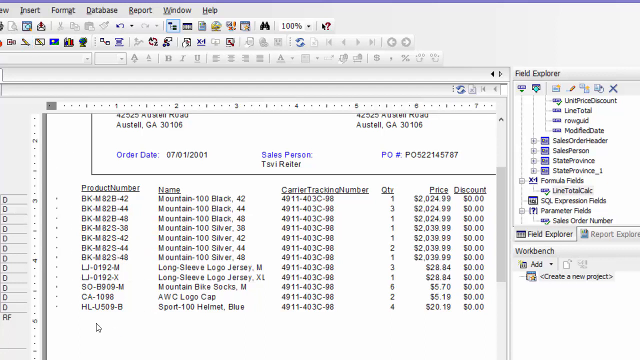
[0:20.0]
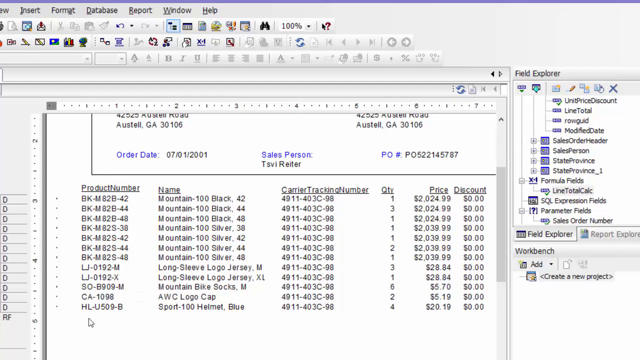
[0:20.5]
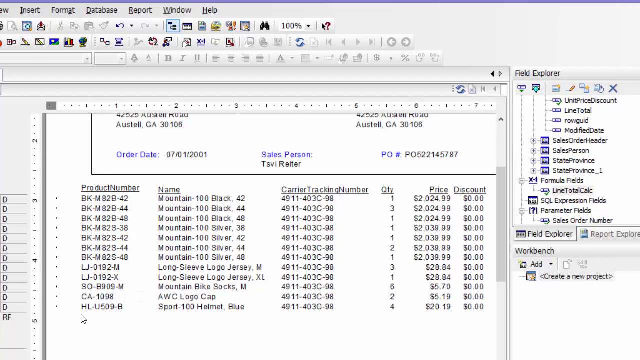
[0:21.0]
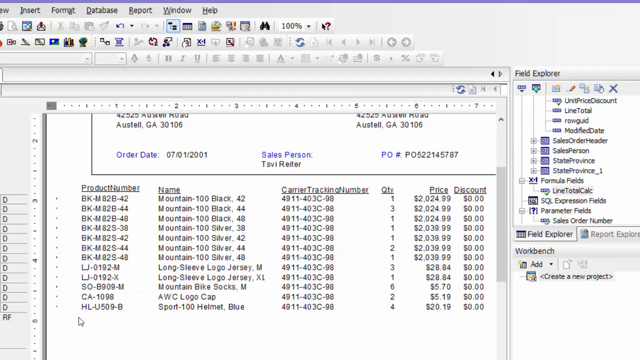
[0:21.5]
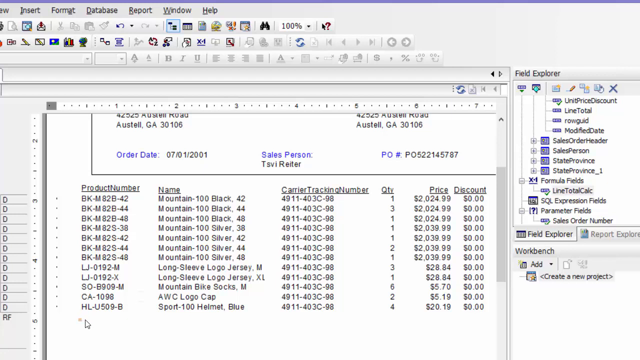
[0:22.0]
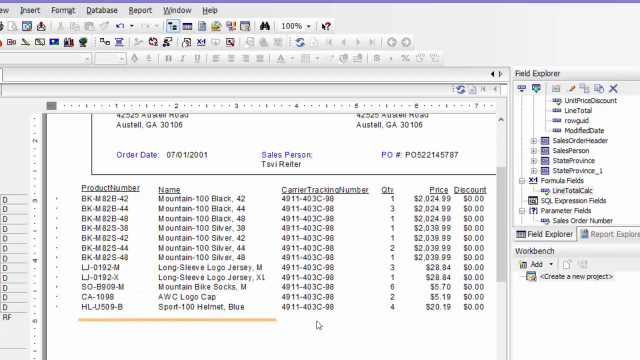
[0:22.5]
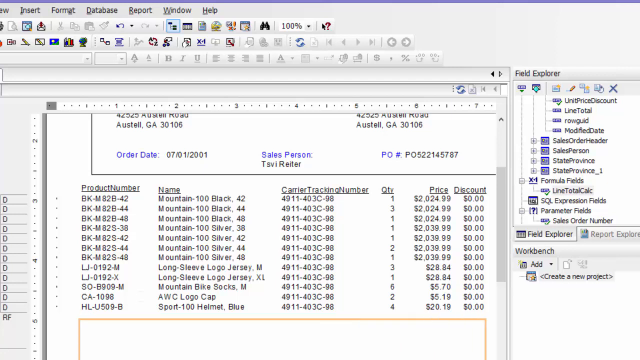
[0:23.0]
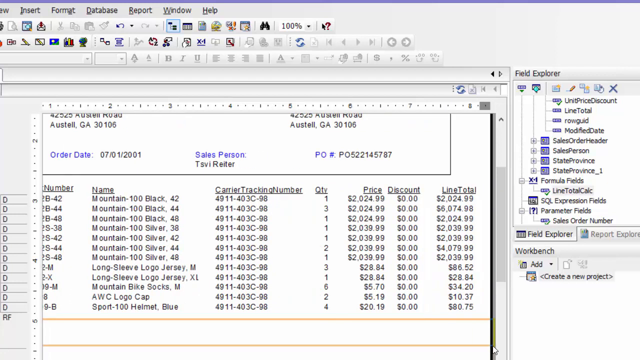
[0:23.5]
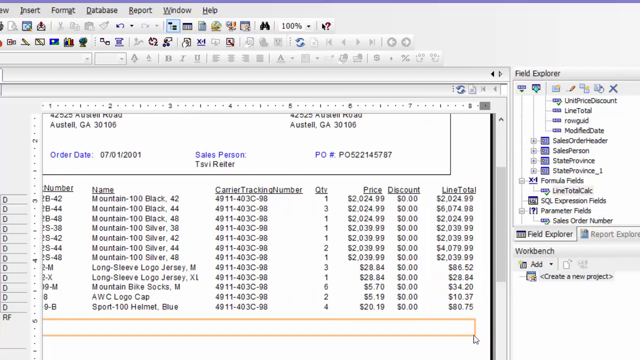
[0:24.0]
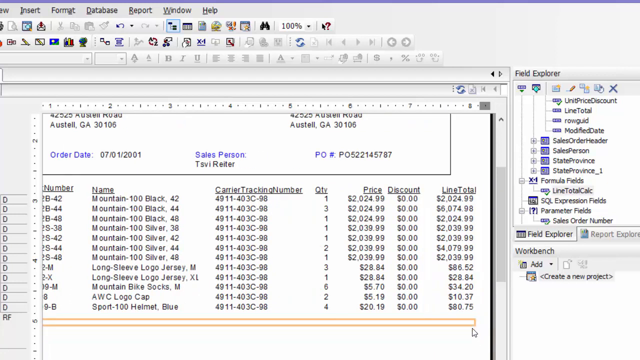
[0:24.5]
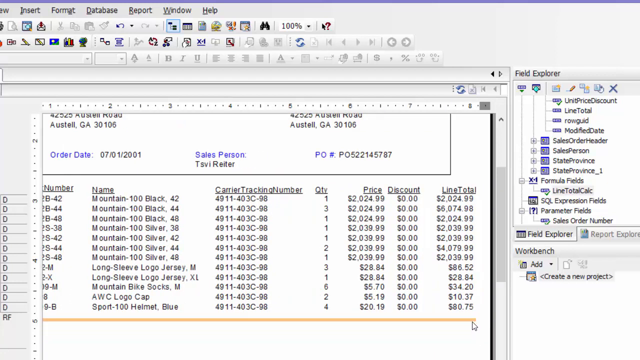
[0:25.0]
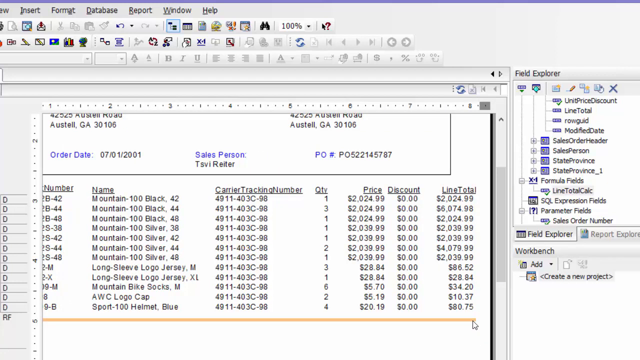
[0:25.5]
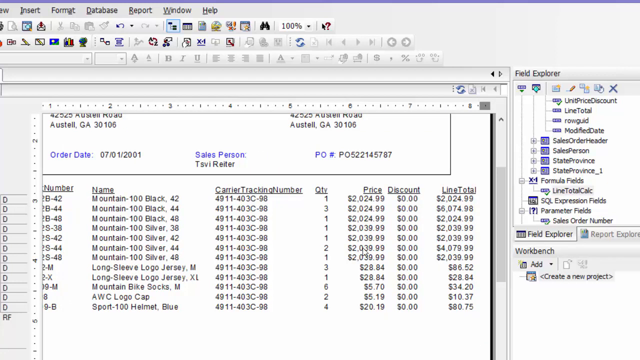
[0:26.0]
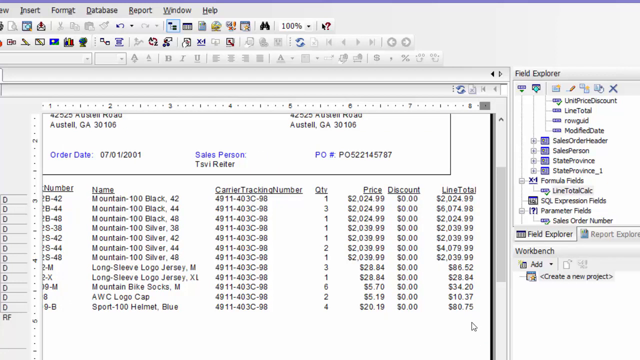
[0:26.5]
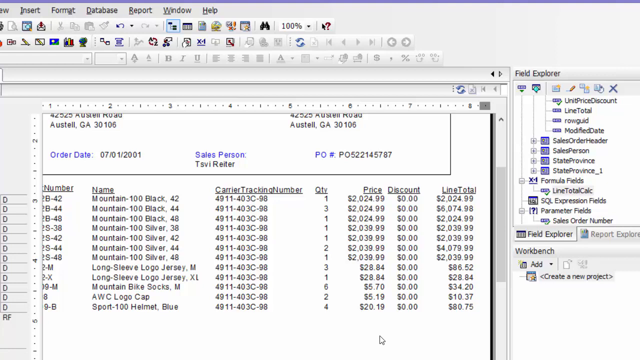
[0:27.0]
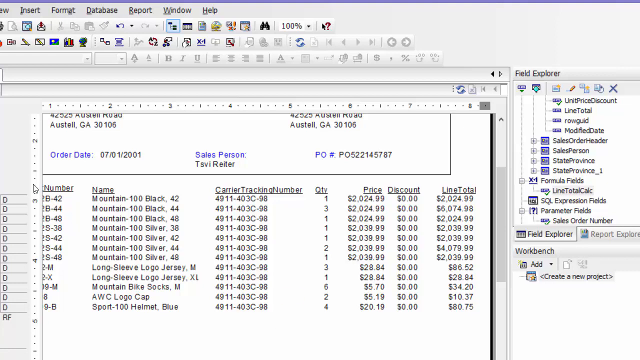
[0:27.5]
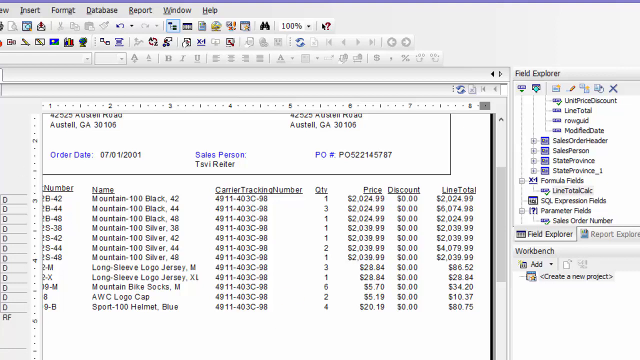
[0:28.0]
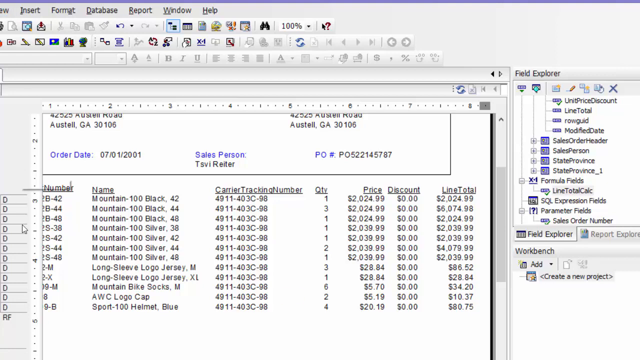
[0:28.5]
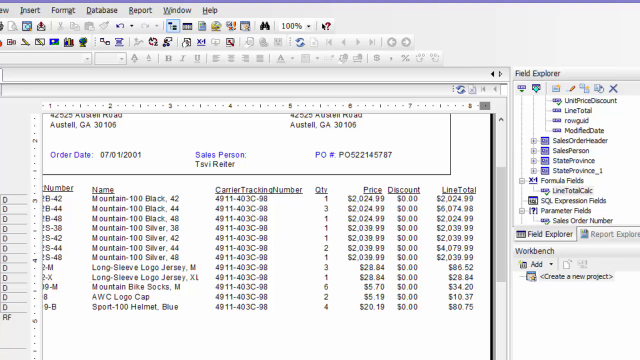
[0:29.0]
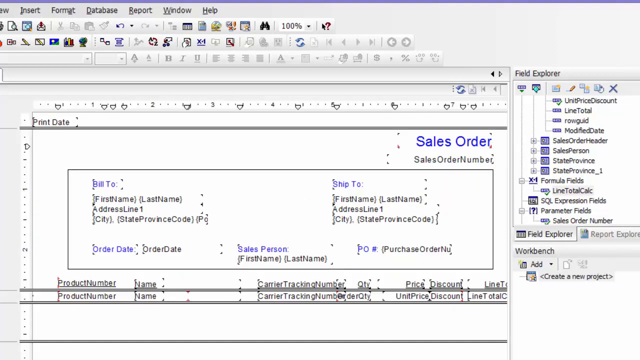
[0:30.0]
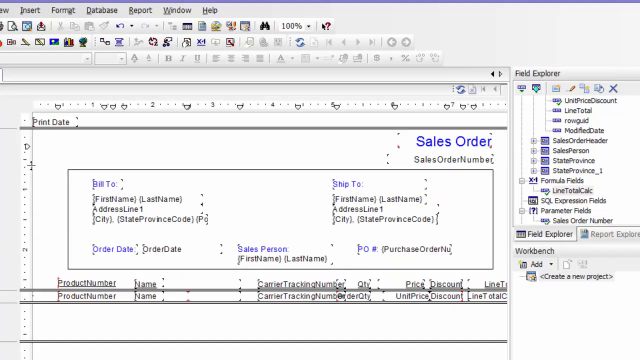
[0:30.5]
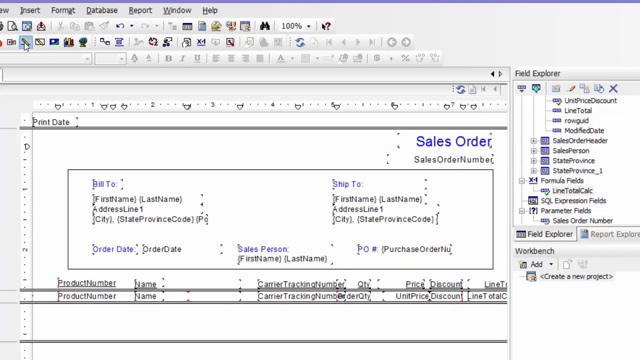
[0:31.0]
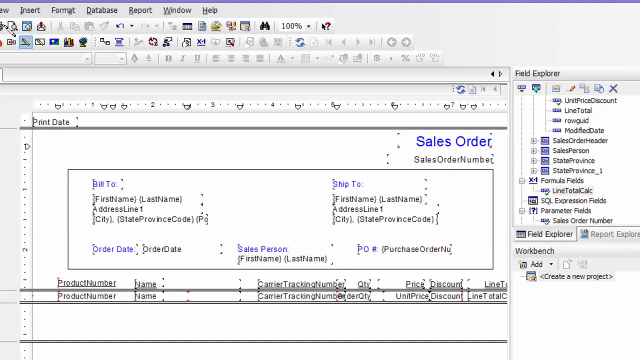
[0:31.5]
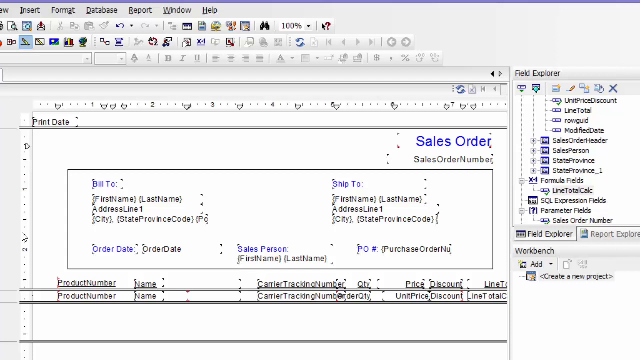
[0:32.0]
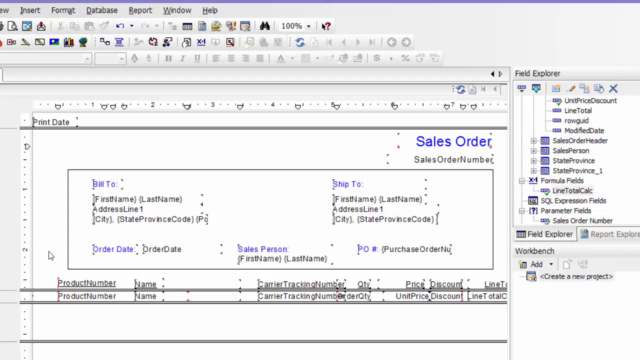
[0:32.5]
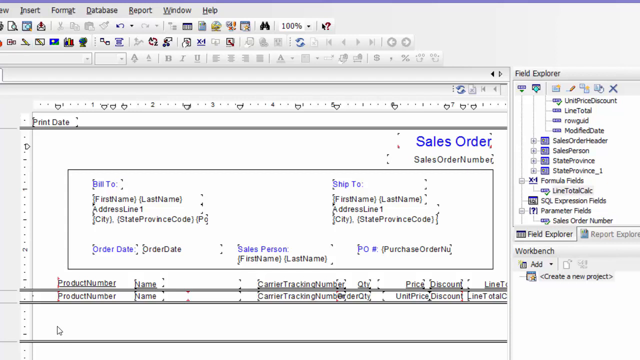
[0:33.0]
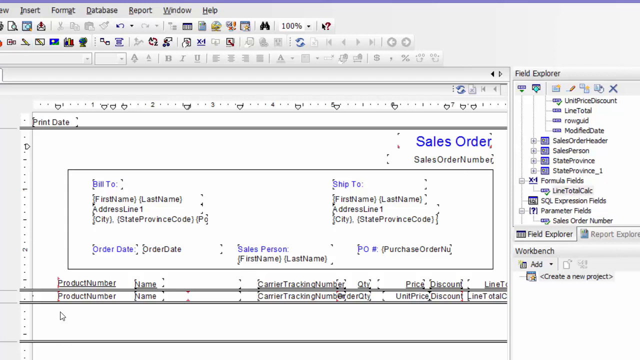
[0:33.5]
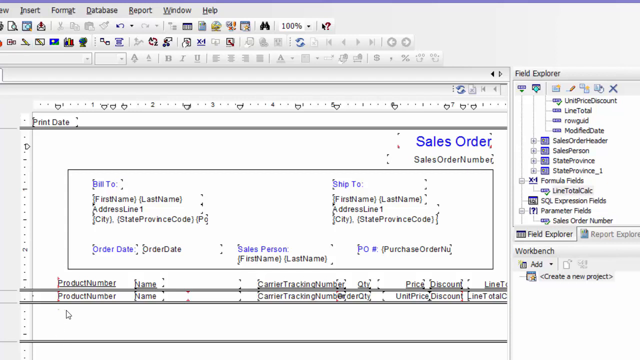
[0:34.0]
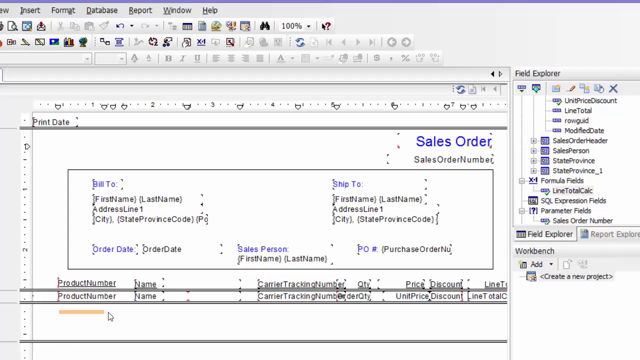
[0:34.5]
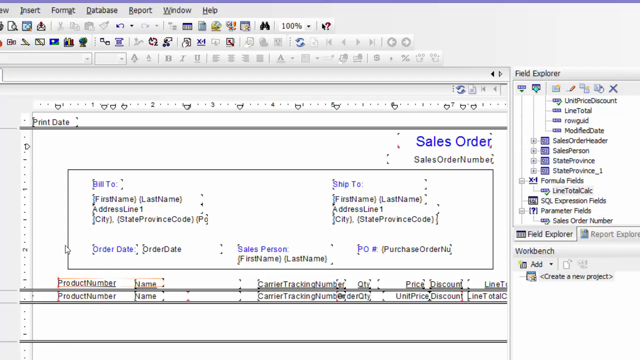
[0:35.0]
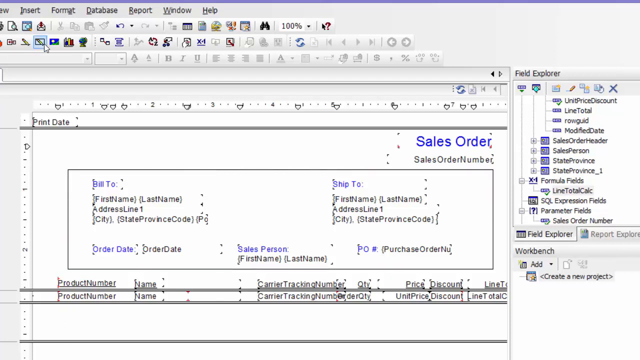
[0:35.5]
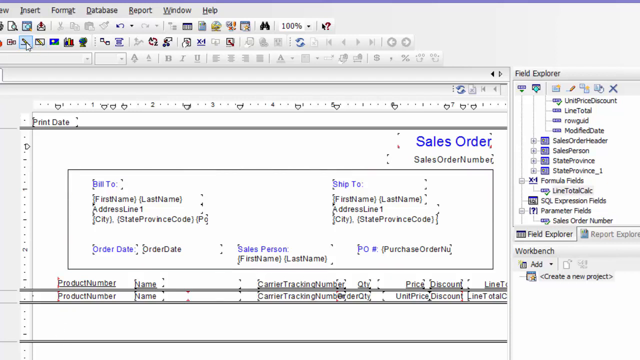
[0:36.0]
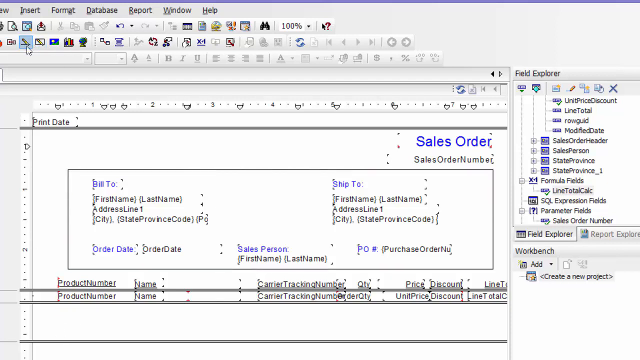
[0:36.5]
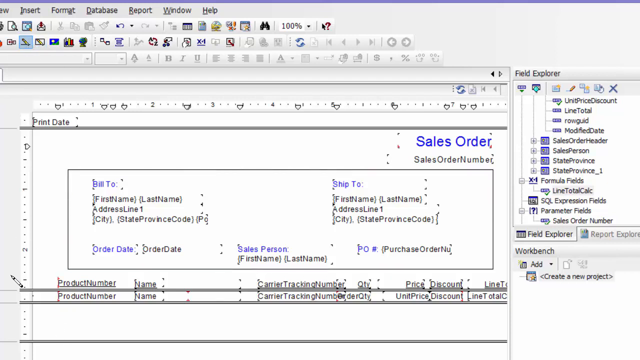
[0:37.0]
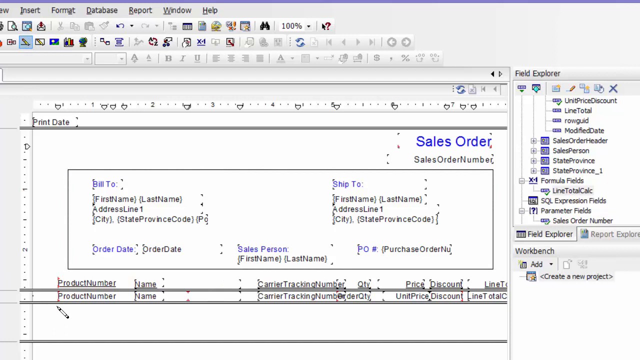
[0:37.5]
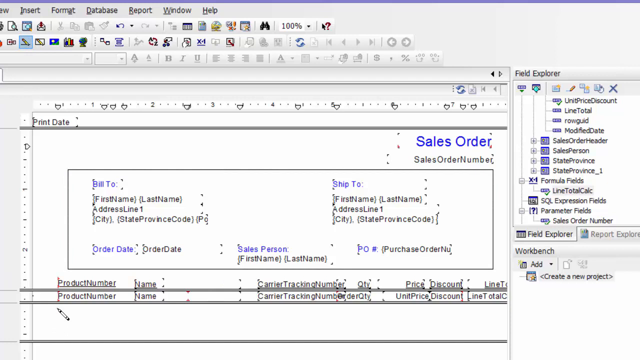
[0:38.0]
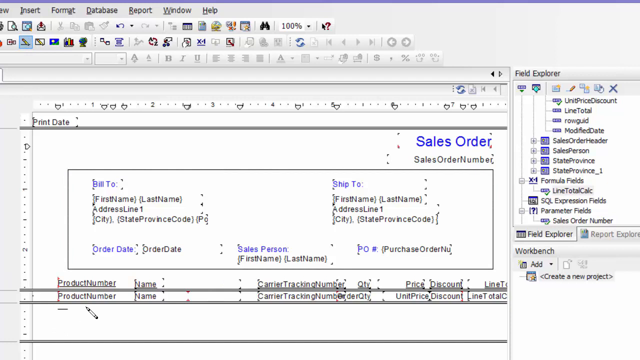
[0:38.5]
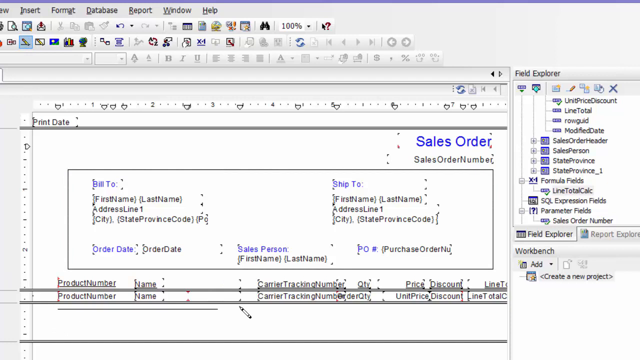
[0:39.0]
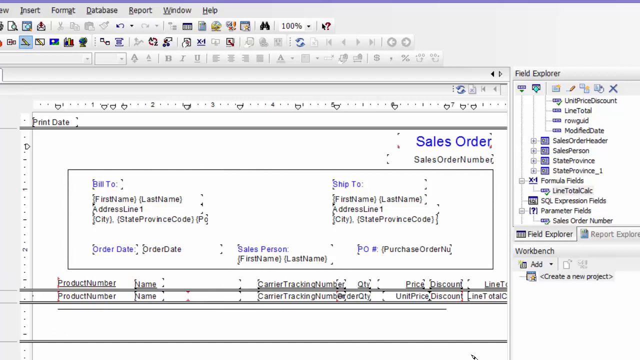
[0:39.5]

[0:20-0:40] The product numbers include several starting with BK-M, some LJ entries with dashes and numbers and letters, and entries with SOCA and HL. Most of the names are mountains and include different colors, such as blacks and silvers. The carrier tracking numbers all start with 4911, 403C, 98, and all of them are the same. Most prices are around the 2000 mark, with a few at the $20.00 mark and at $5.00. No discounts are applied. Using the cursor, the user starts drawing an orange box below the very last entry, then clicks off of it. The cursor goes back up to the top and they click off the pencil mark. A double line appears under the first two product numbers. Some of the product number and name information is cleared out, leaving those entries blank. Little borders now appear around each of the lines. The user goes back down and appears to use a black box instead of orange.